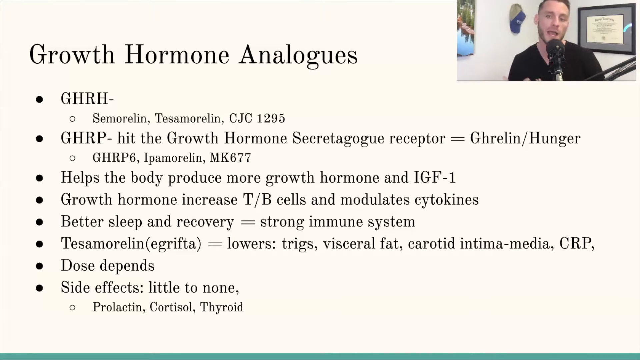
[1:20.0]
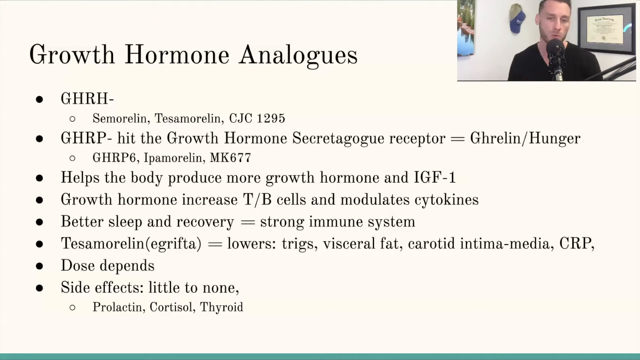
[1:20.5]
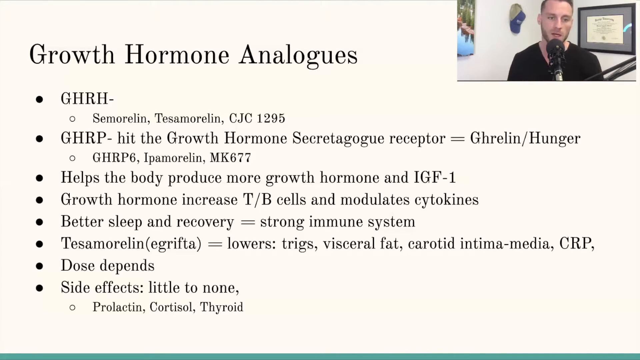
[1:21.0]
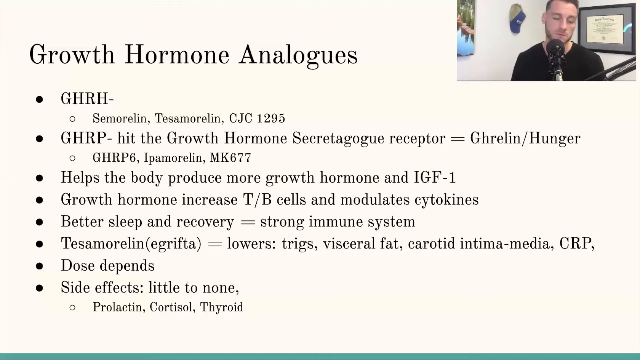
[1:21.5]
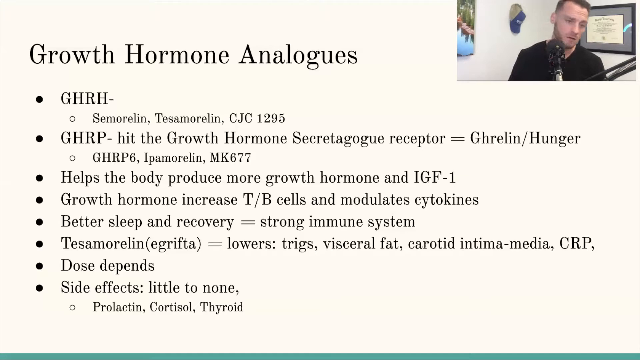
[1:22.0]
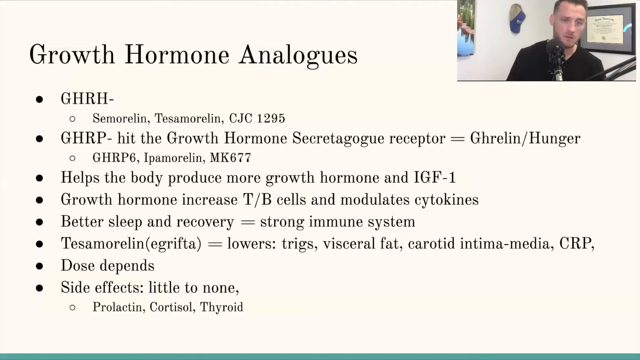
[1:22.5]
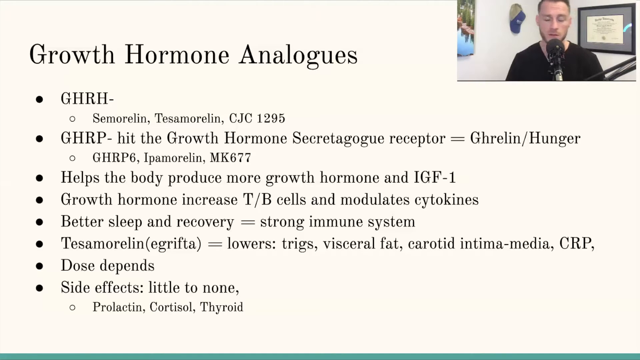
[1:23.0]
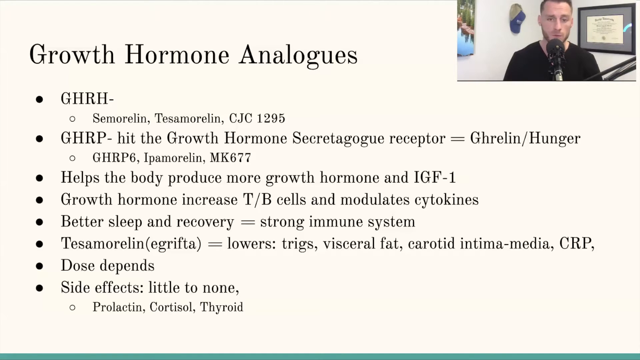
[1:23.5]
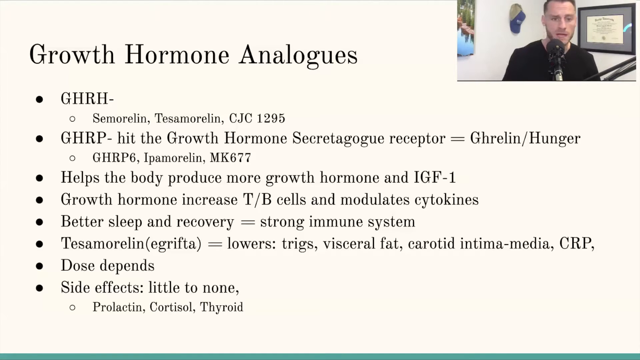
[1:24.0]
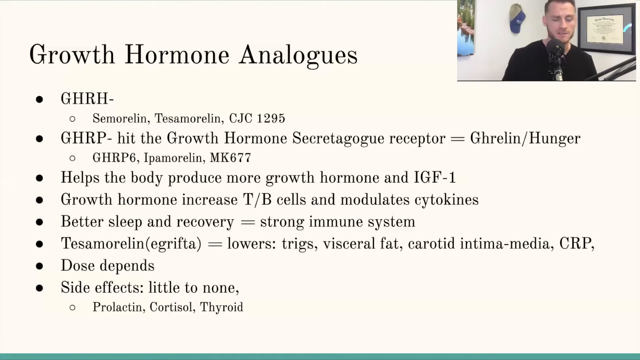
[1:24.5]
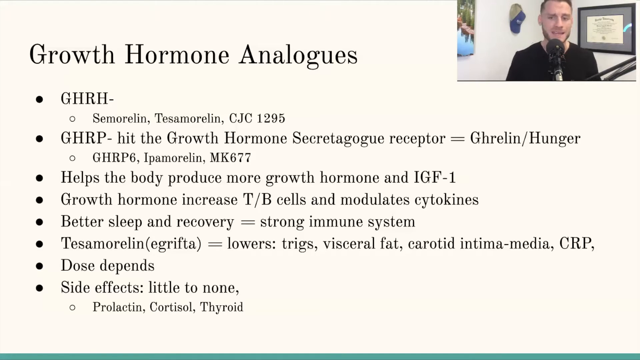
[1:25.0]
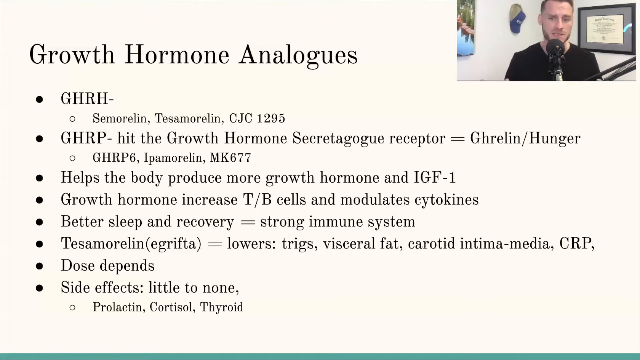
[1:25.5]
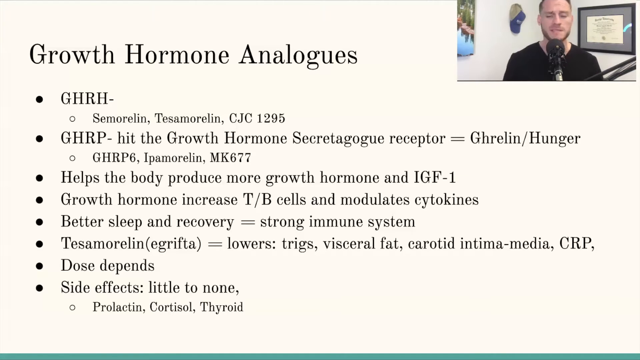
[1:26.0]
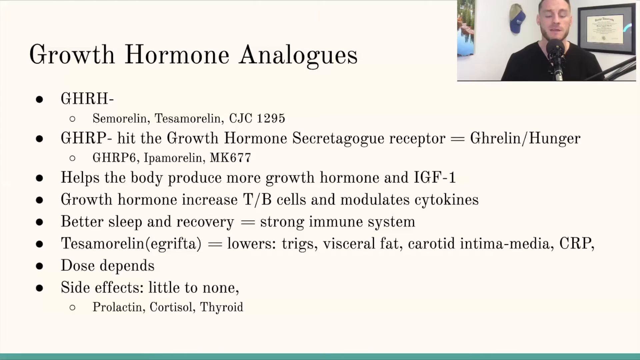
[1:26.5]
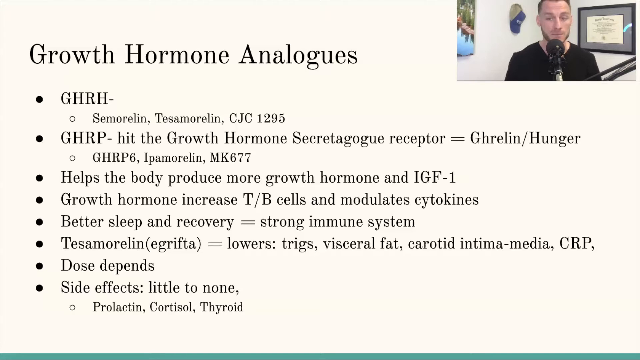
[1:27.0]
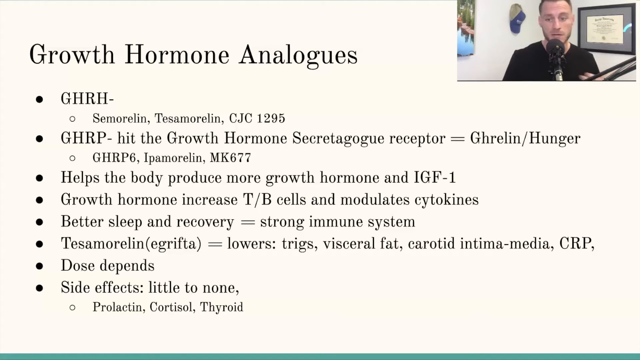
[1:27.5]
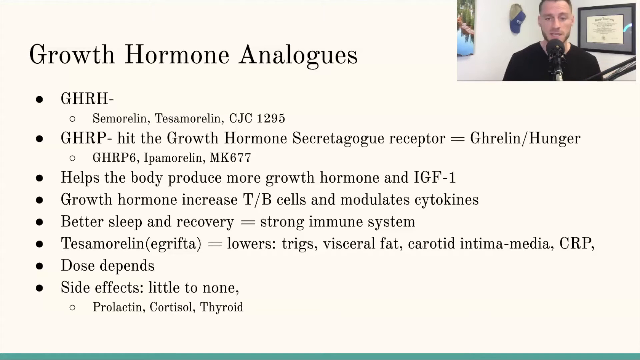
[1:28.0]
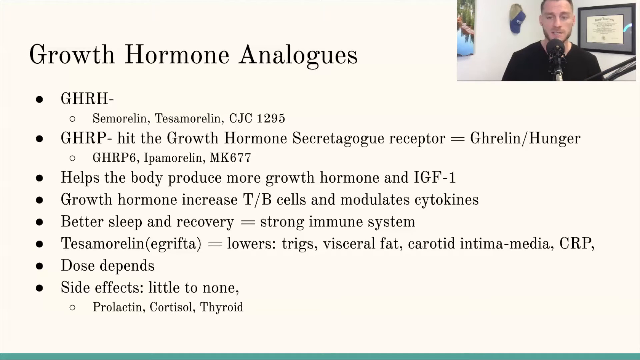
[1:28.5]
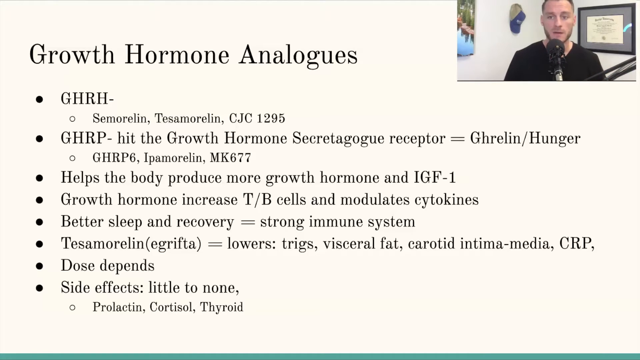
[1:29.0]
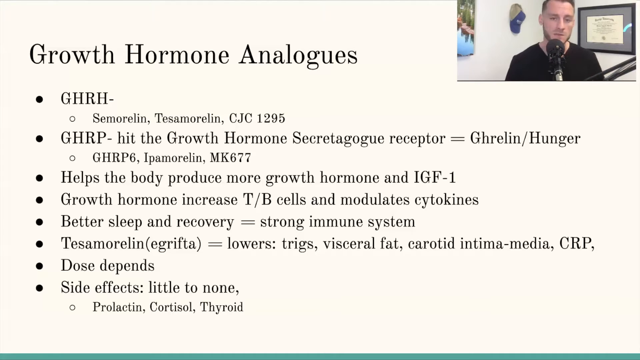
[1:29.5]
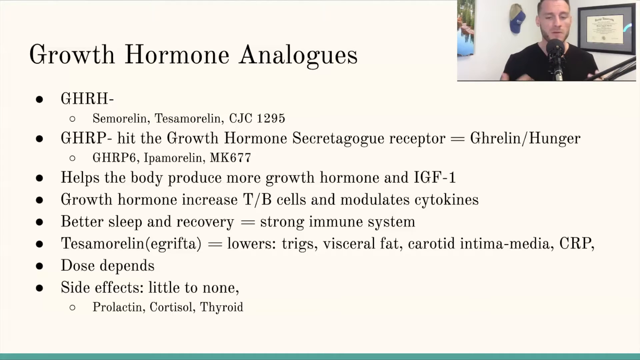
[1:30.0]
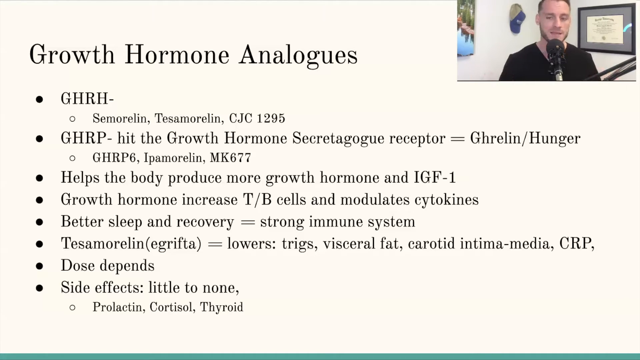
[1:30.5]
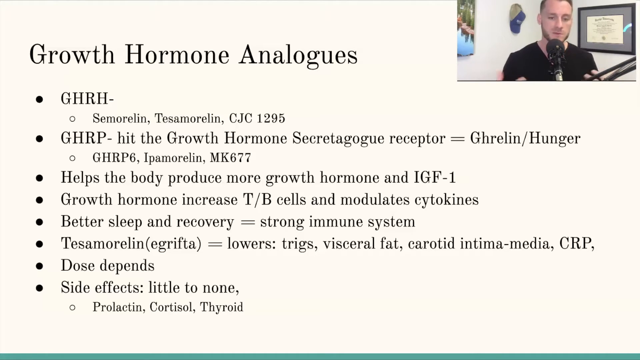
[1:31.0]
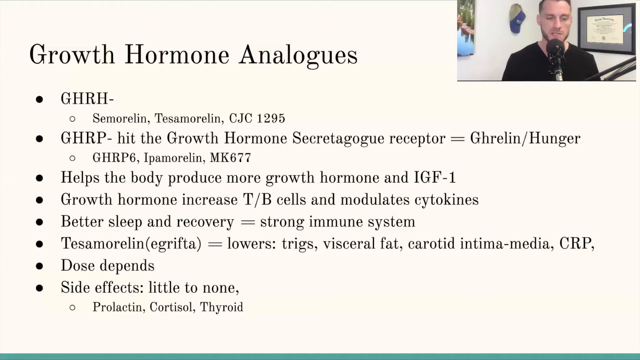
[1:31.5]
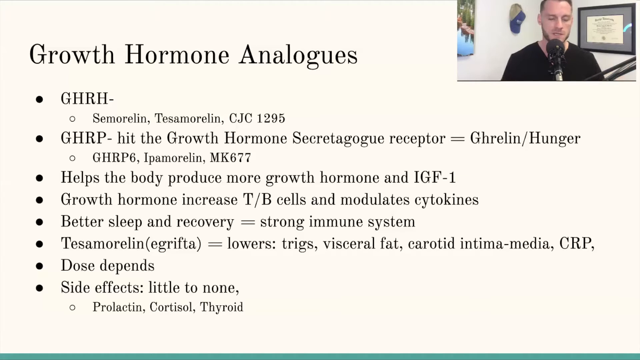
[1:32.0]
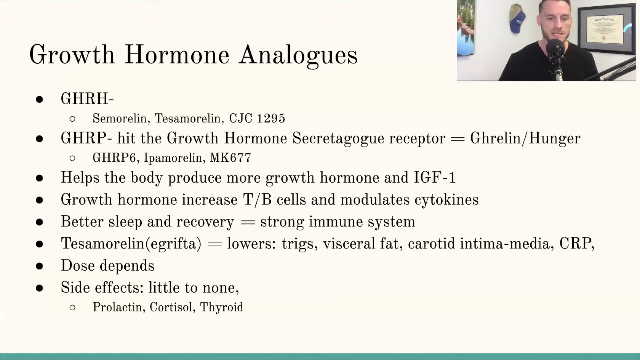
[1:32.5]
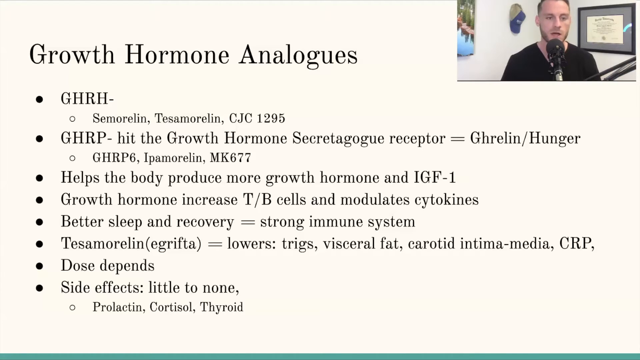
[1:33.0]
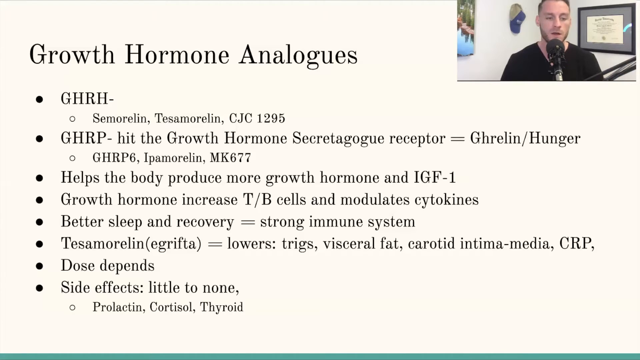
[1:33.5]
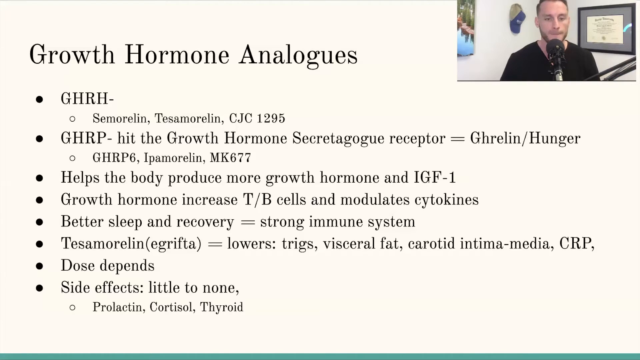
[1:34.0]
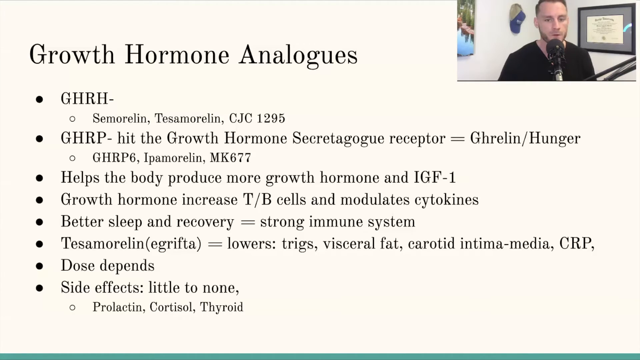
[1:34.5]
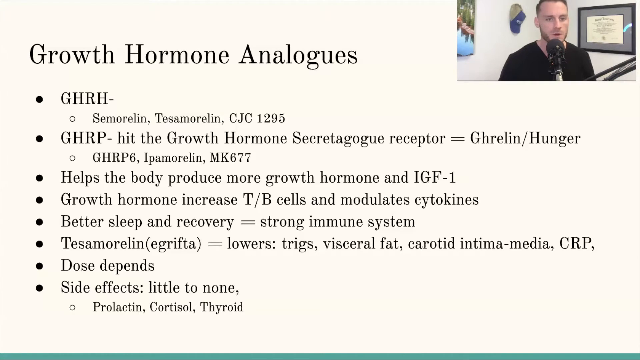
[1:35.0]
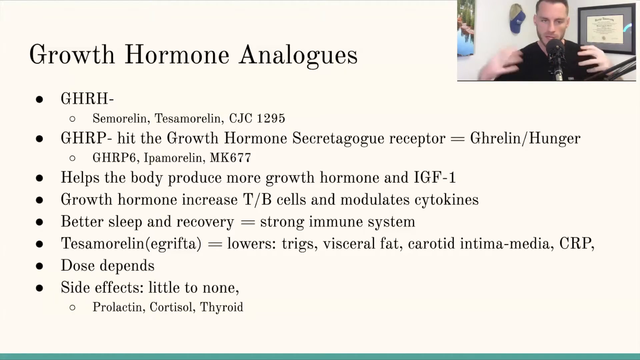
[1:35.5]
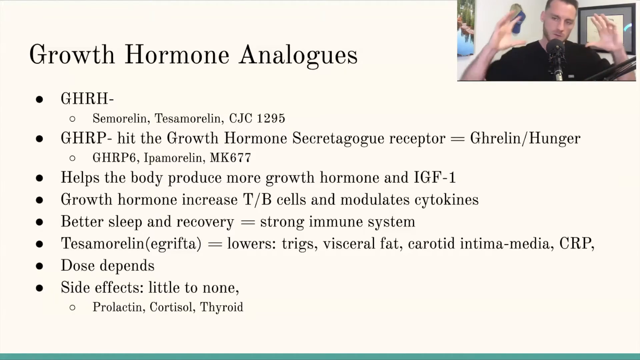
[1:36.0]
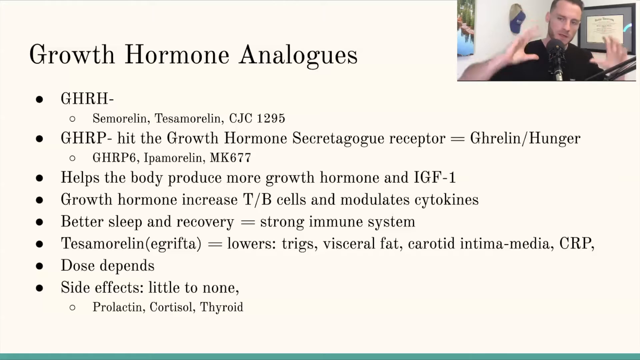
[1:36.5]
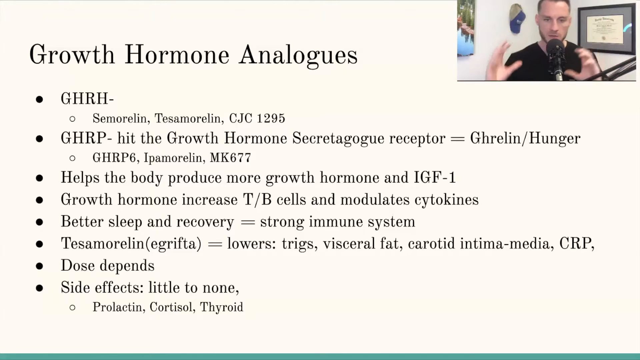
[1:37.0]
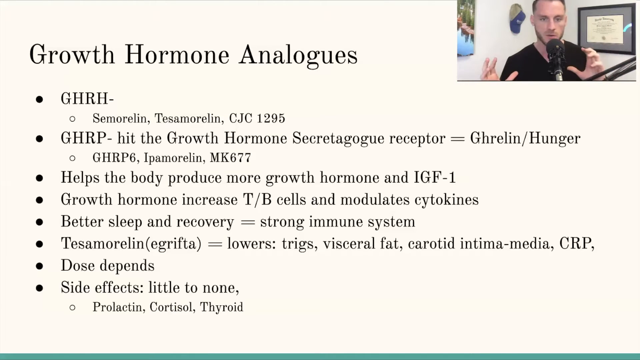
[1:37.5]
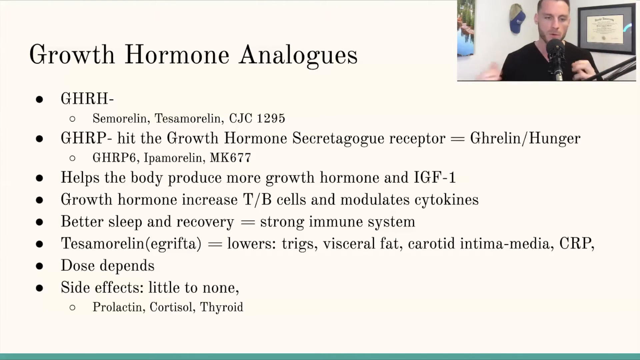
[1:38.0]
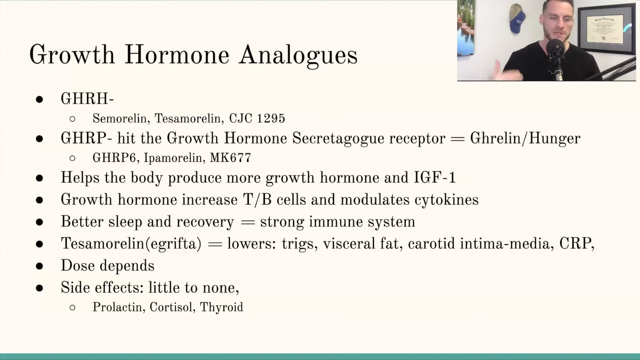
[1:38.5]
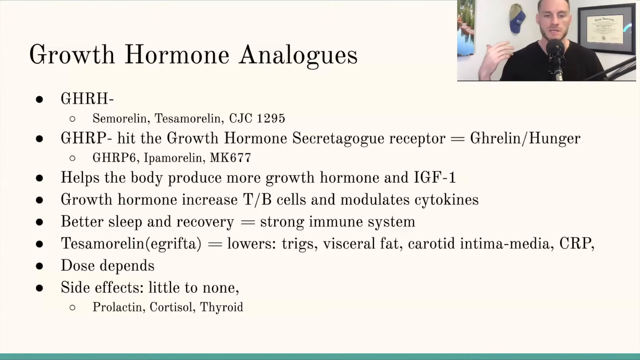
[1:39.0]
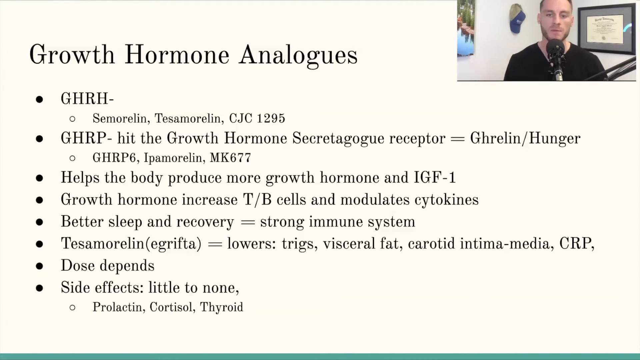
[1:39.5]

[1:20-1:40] The presenter continues talking in the top right of the screen, using his hands for emphasis and repeatedly bringing them up into the camera's view. He looks almost as if he is measuring with his hands, making measurement-like gestures. He does not pause or interact with anyone, talking continuously about the same slide.